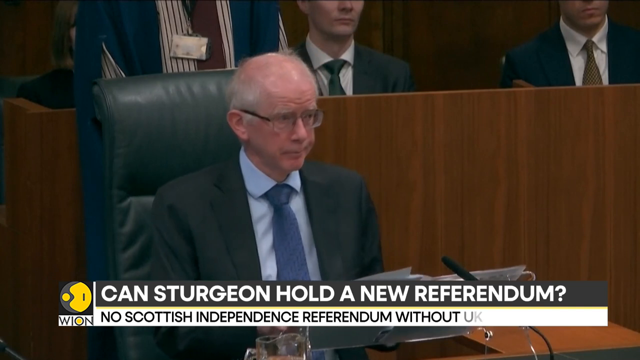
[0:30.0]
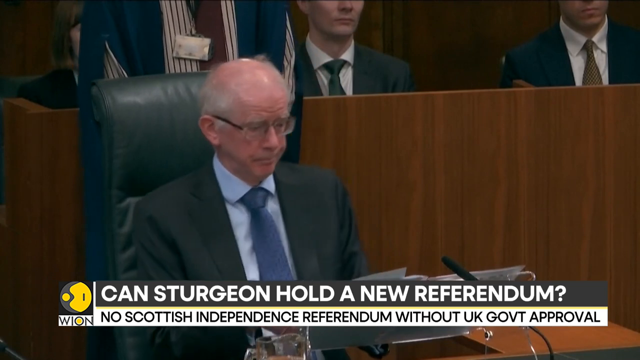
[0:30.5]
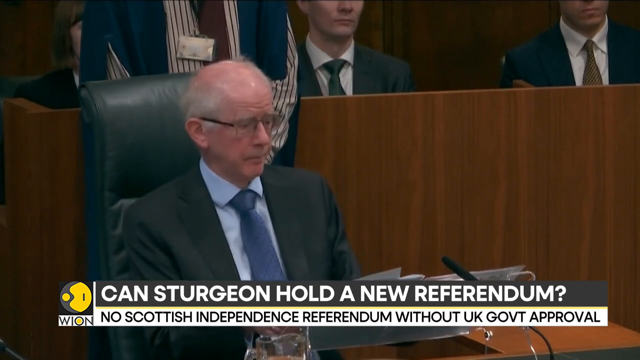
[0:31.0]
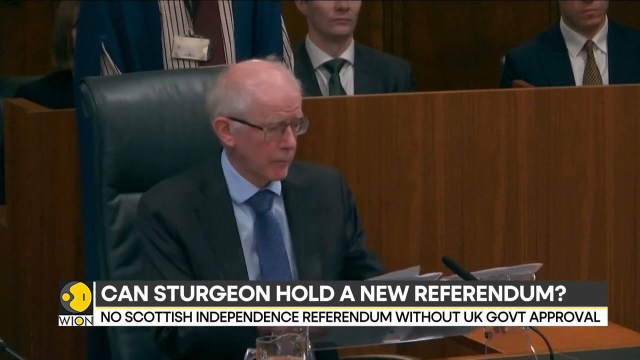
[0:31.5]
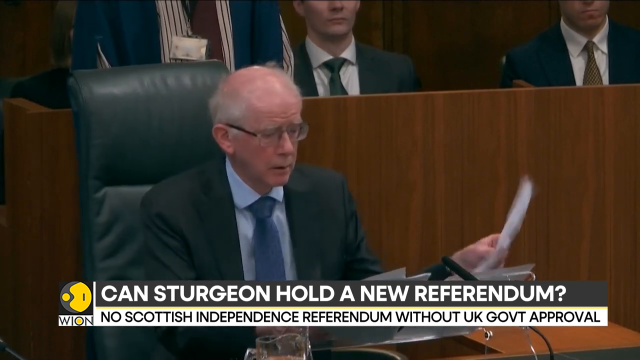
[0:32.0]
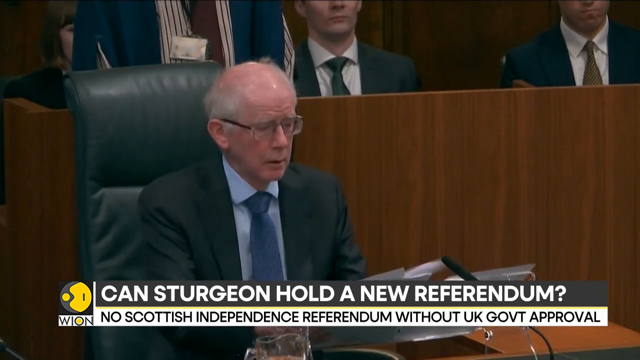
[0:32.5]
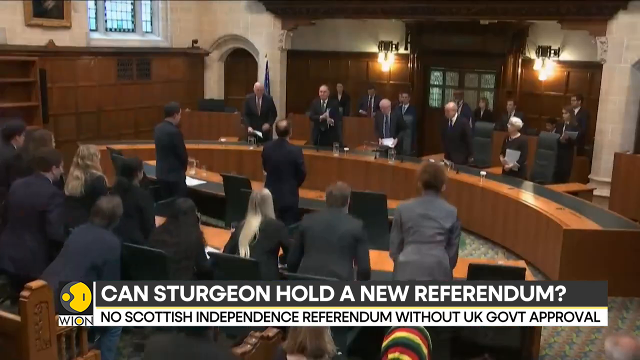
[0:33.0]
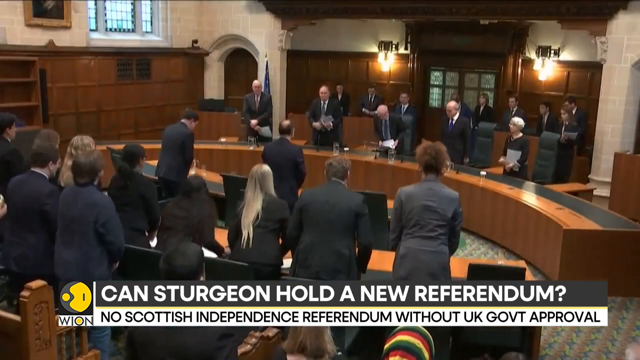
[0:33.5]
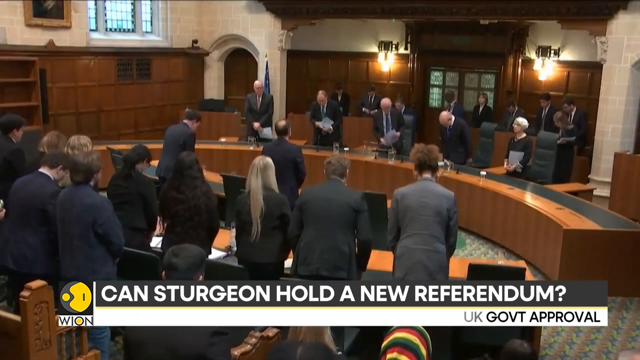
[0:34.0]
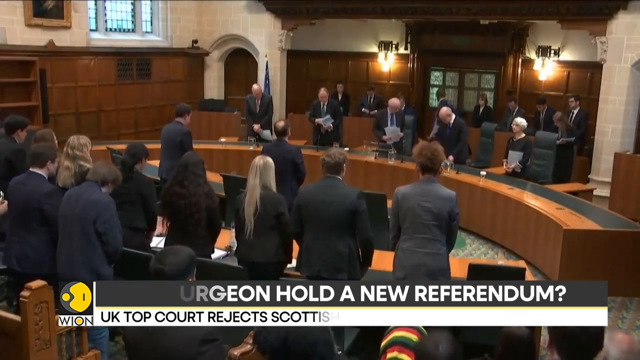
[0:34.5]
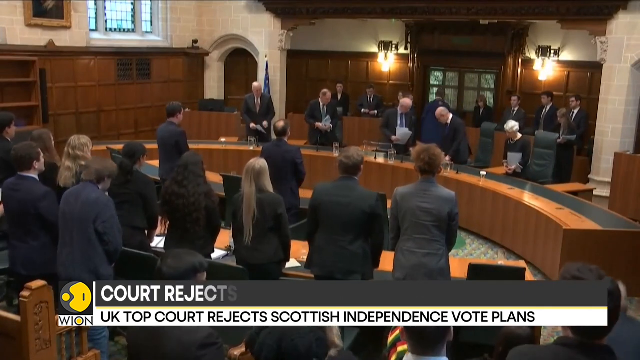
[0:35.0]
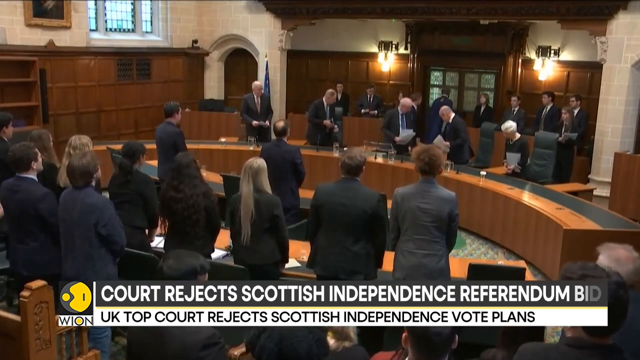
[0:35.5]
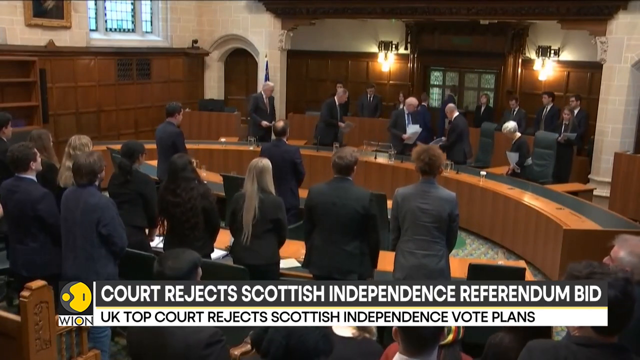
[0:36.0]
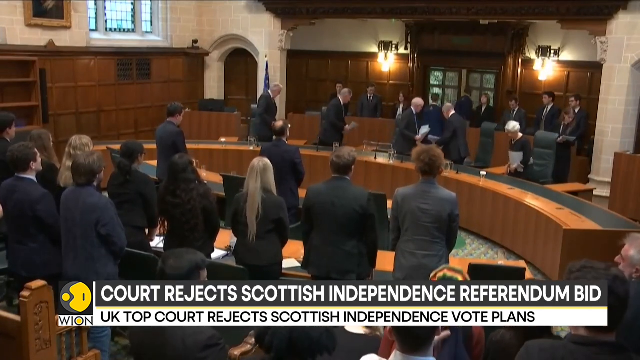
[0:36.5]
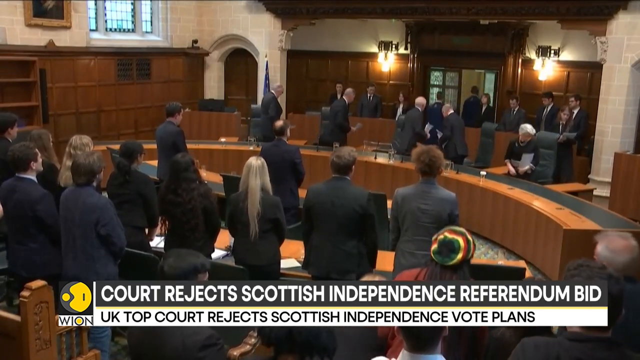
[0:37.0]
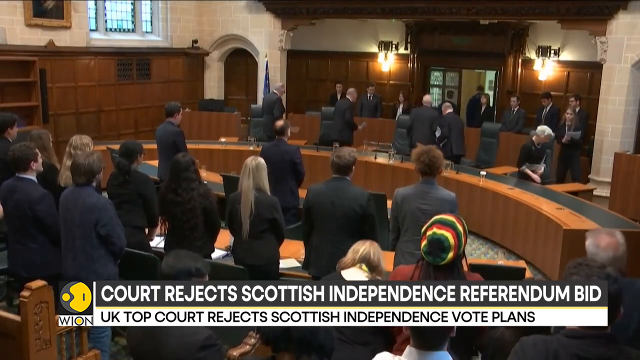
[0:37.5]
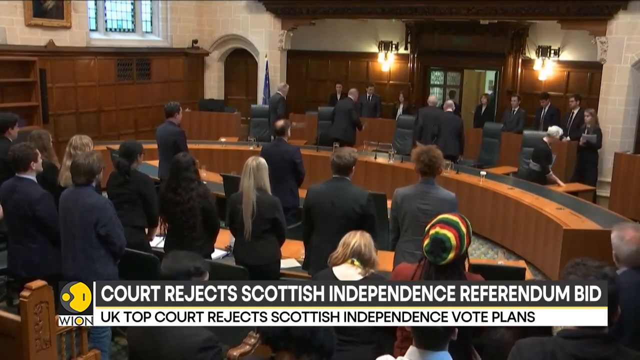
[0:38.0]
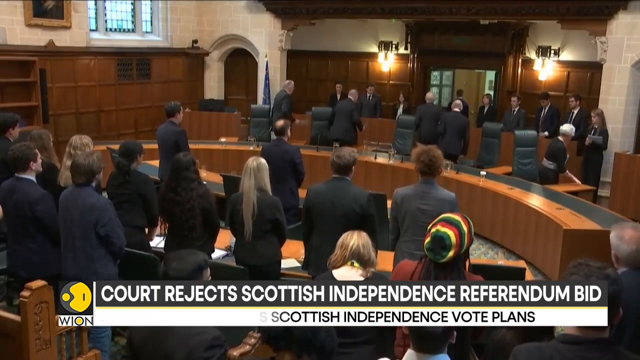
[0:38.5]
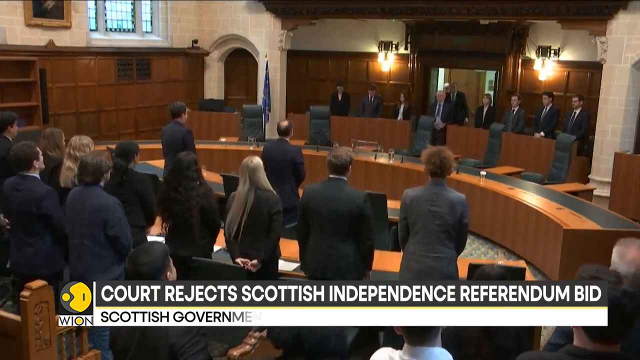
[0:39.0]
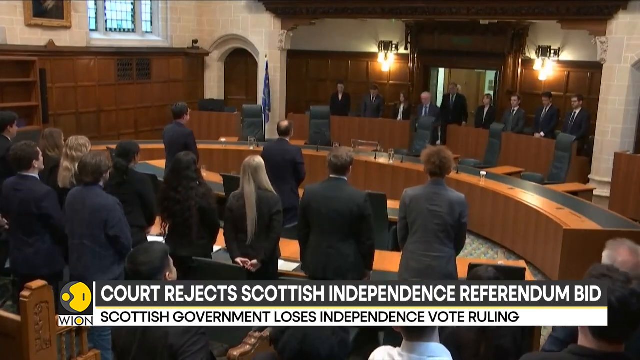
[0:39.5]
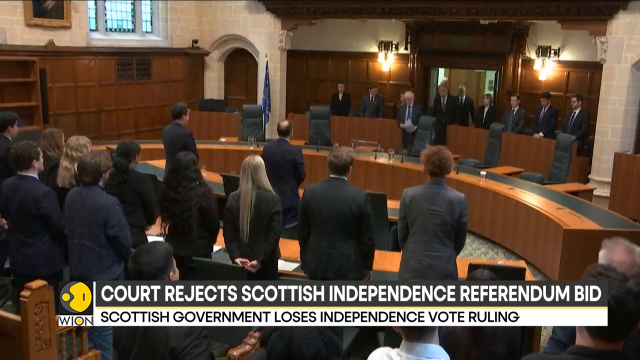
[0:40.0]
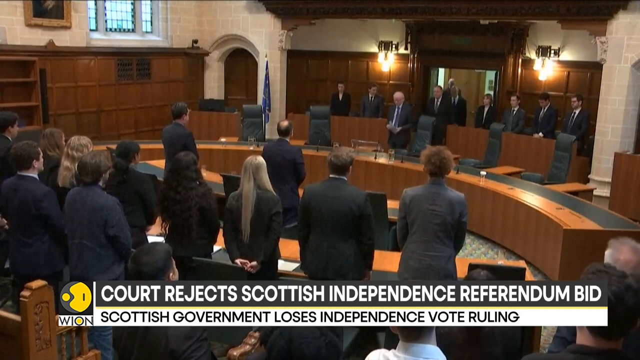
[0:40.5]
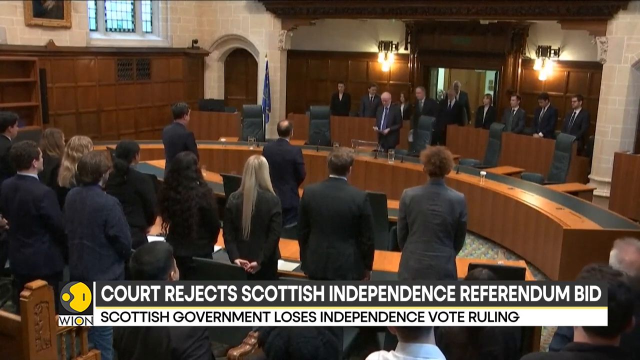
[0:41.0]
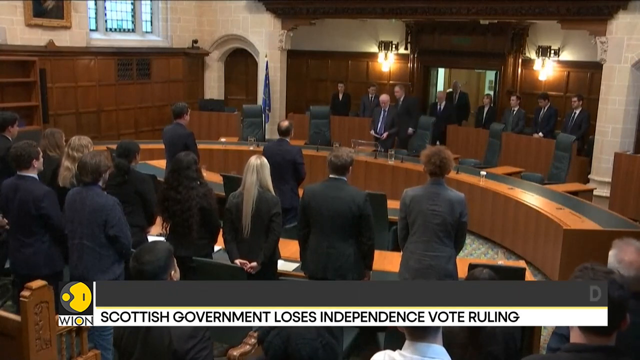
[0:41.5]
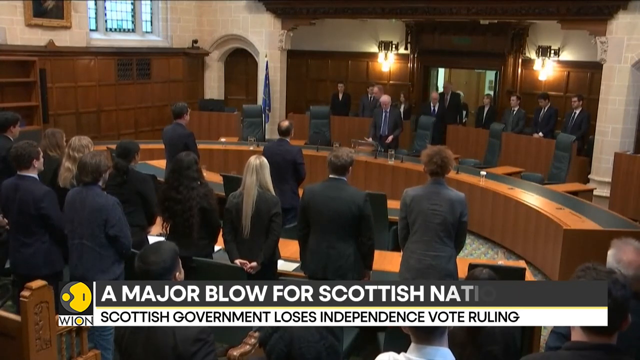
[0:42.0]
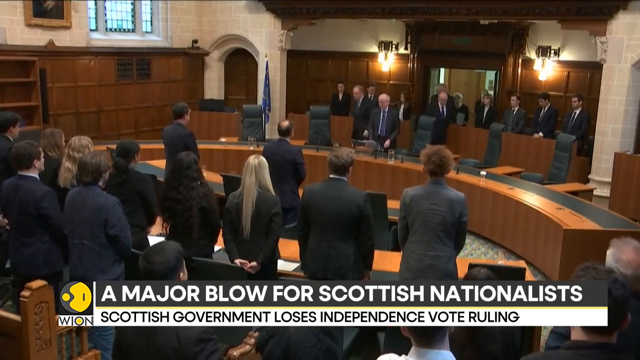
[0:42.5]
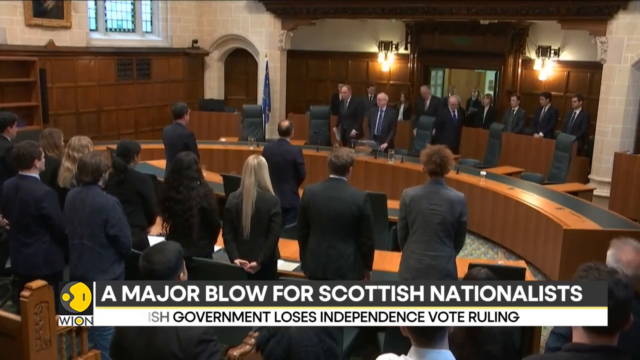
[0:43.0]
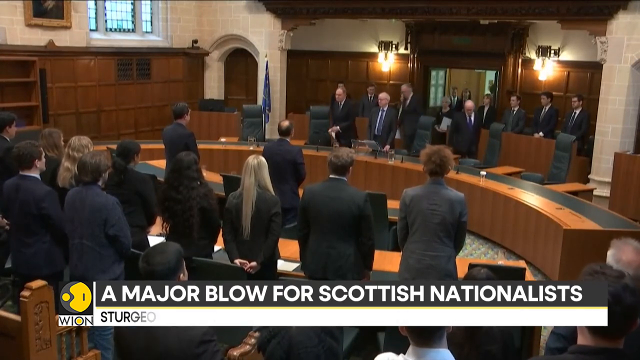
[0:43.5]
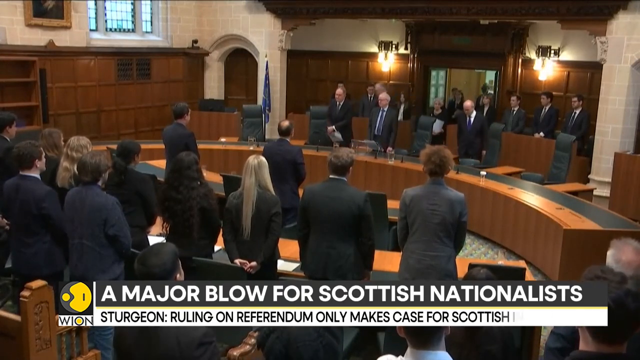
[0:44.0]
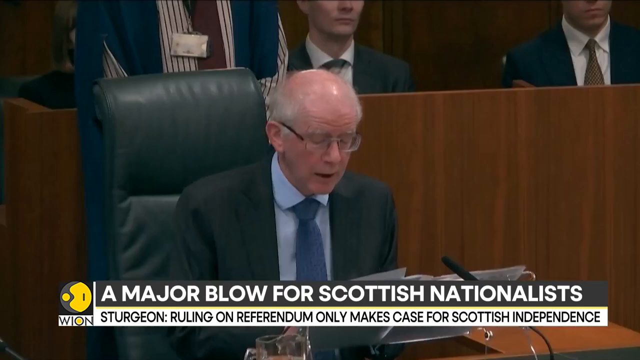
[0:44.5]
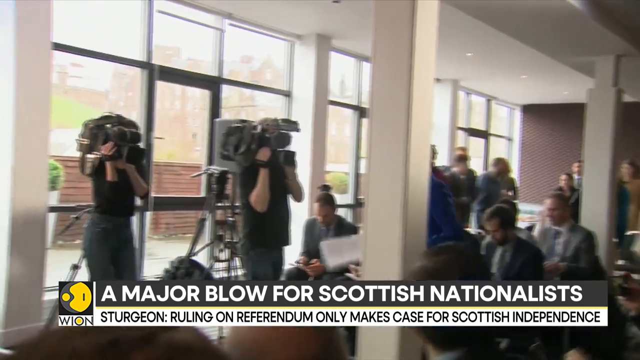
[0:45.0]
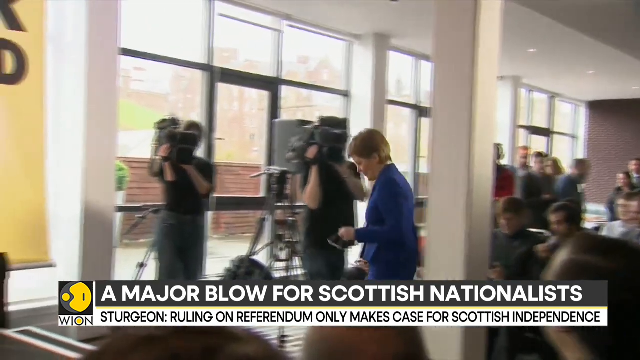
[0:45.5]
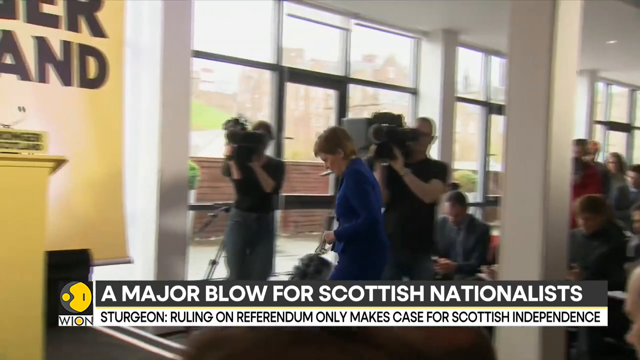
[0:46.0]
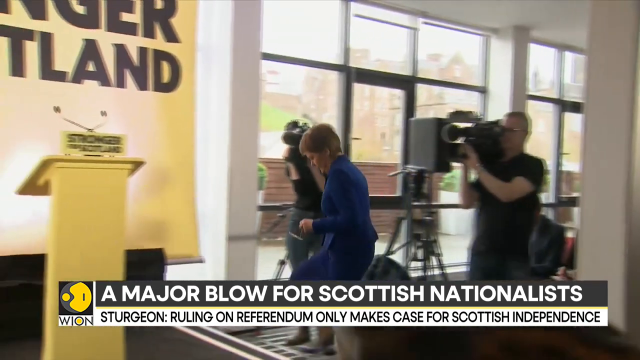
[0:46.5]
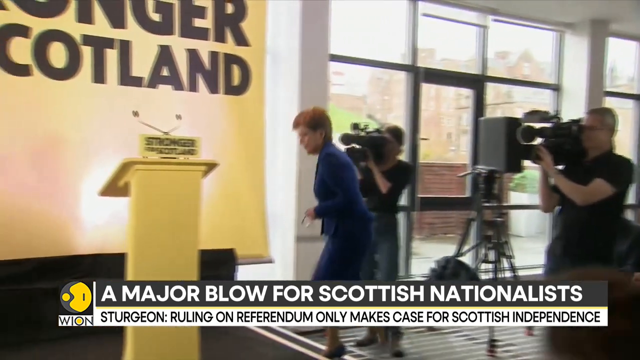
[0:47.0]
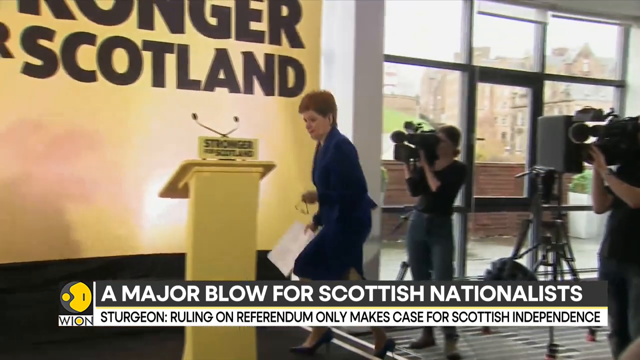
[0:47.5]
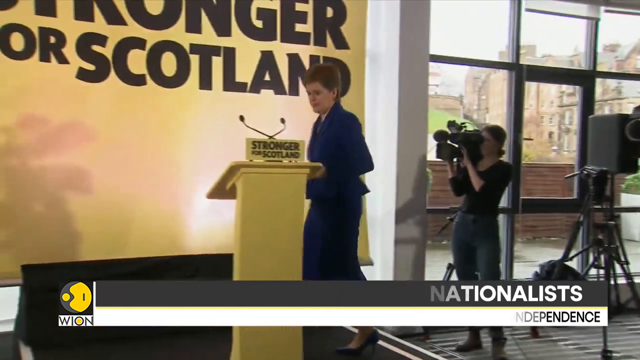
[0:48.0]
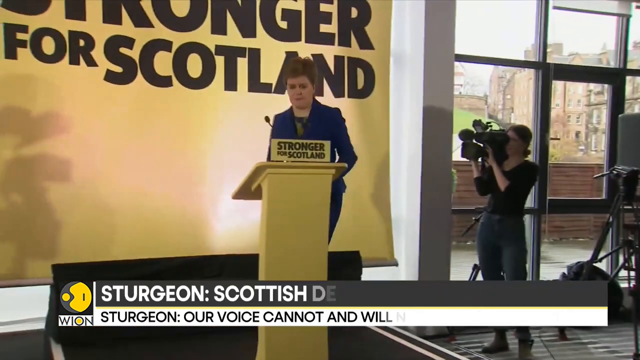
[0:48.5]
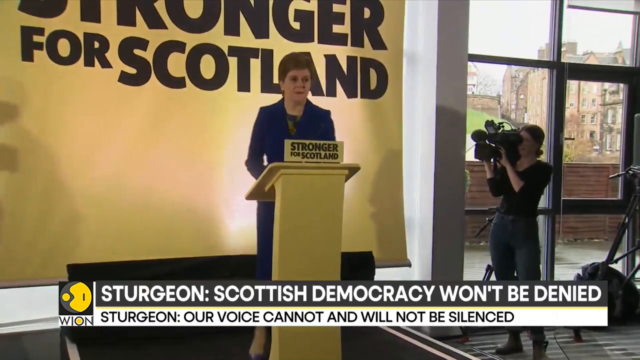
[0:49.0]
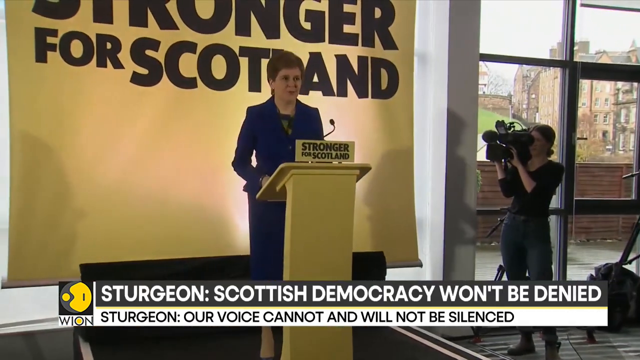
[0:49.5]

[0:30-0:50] The screen returns to the people standing up, presumably in a parliamentary court. There is a brown table with a bunch of microphones, like in a parliament or a courthouse, and two lights. A banner reads "Court rejects Scottish referendum bid, top court rejects Scottish independent vote plans." The banner then changes to "a major blows for Scottish nationalist. Sturgeon ruling on referendum only makes case for Scottish independence." Another person comes into the picture: a woman of unknown age, who is speaking. There is a yellow podium, and the words "stronger for Scotland" become visible. She is probably part of the Scottish independence movement.